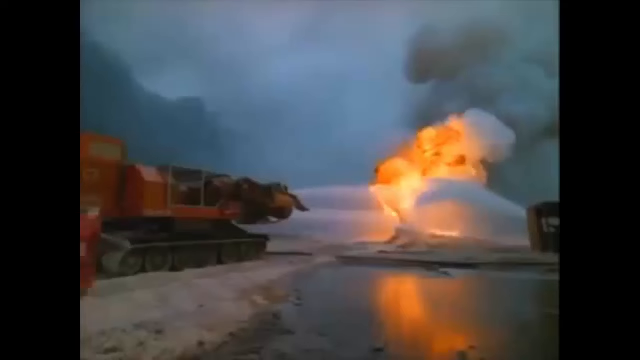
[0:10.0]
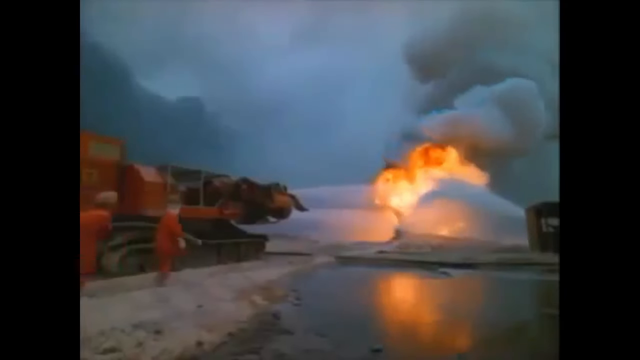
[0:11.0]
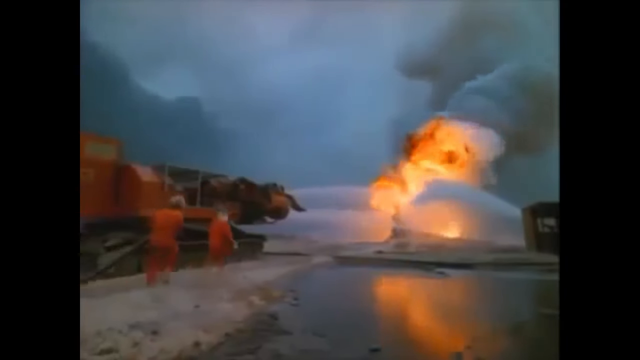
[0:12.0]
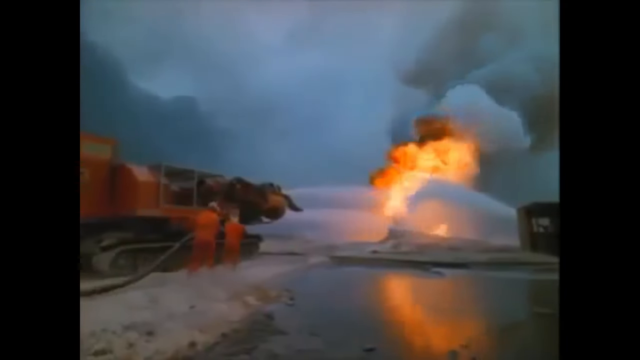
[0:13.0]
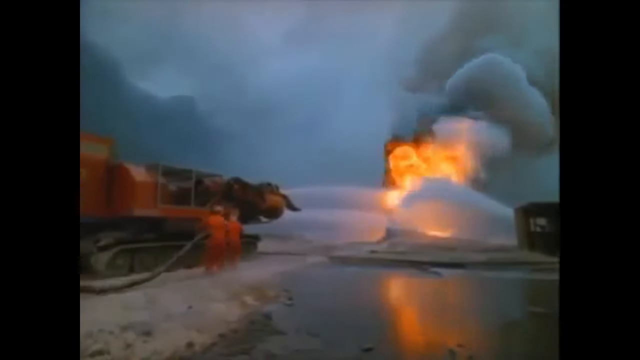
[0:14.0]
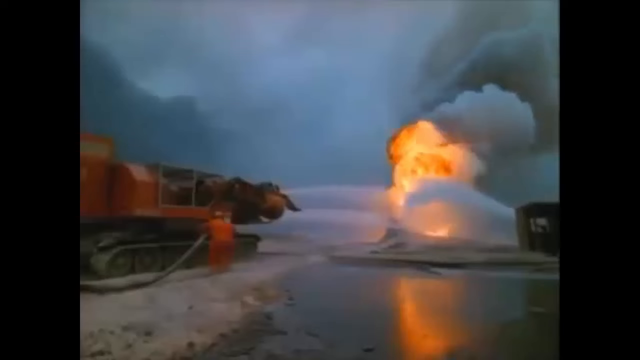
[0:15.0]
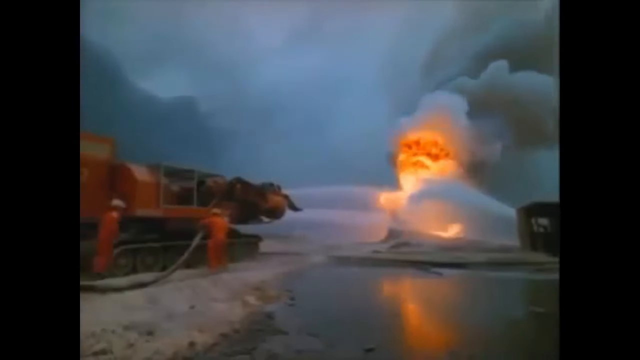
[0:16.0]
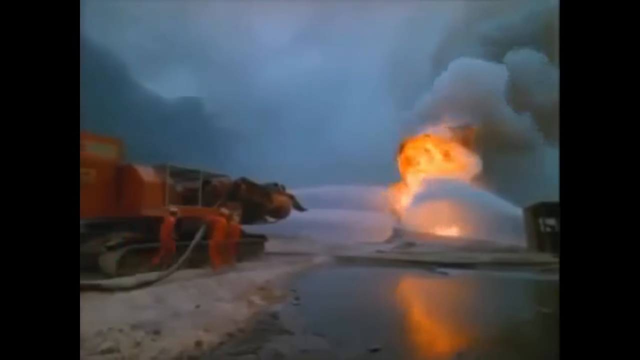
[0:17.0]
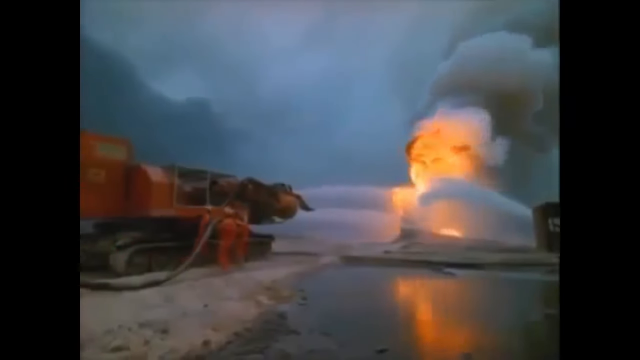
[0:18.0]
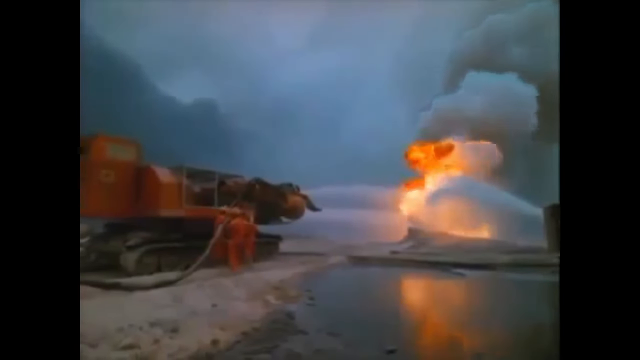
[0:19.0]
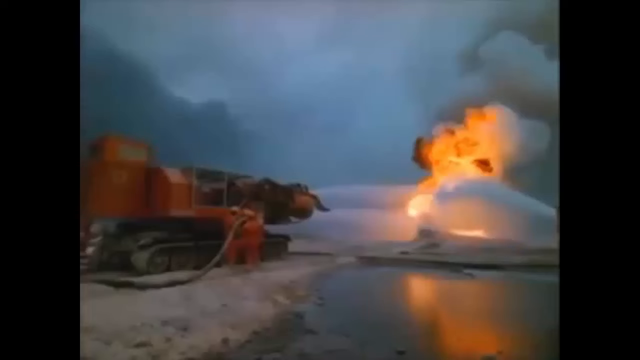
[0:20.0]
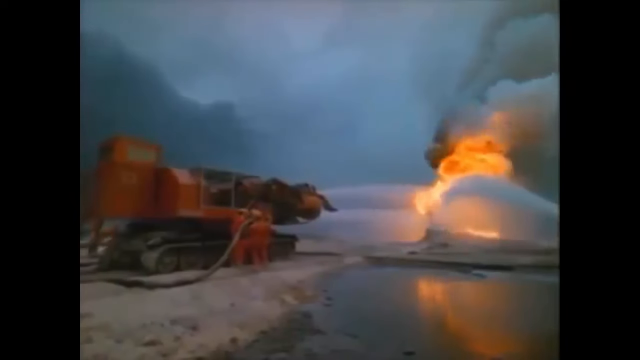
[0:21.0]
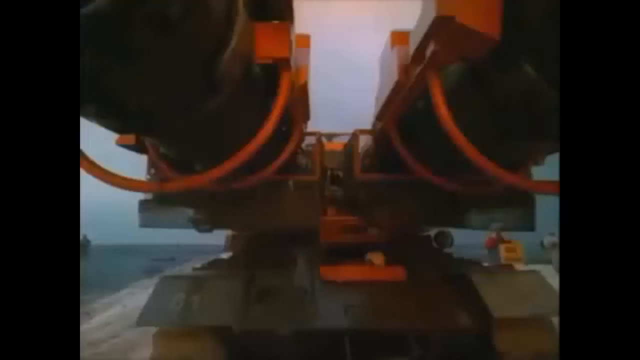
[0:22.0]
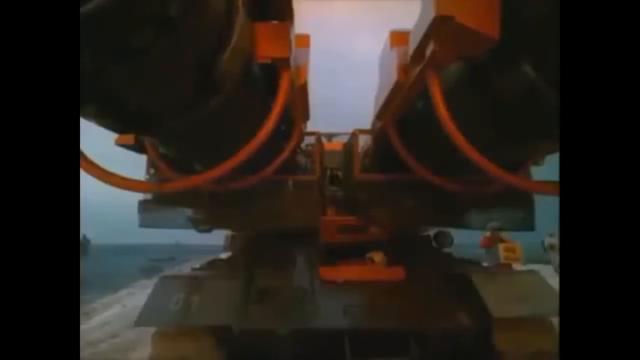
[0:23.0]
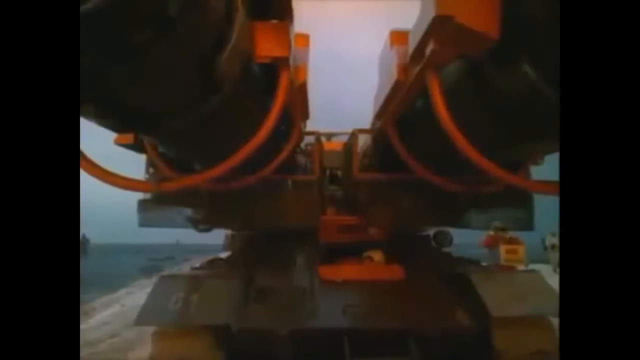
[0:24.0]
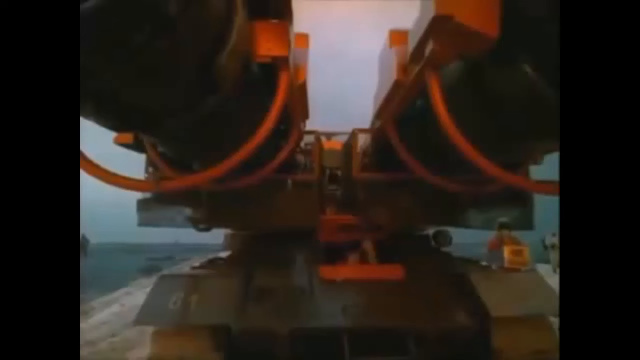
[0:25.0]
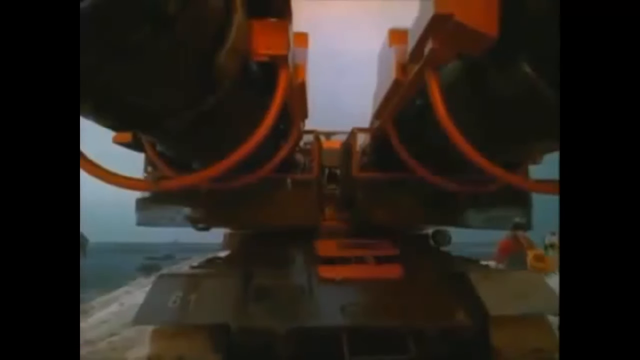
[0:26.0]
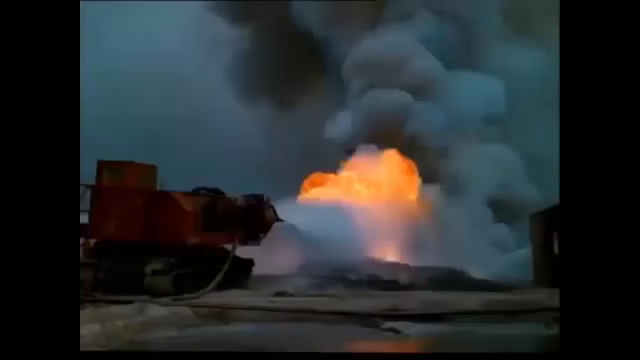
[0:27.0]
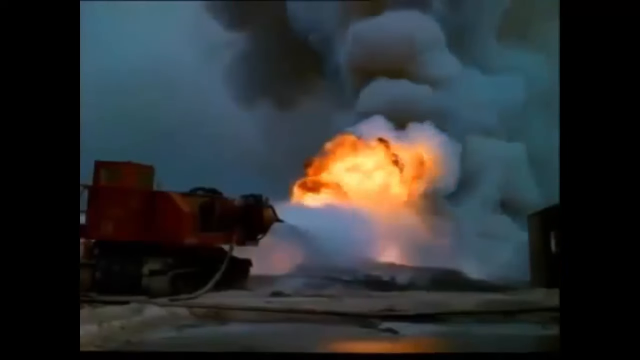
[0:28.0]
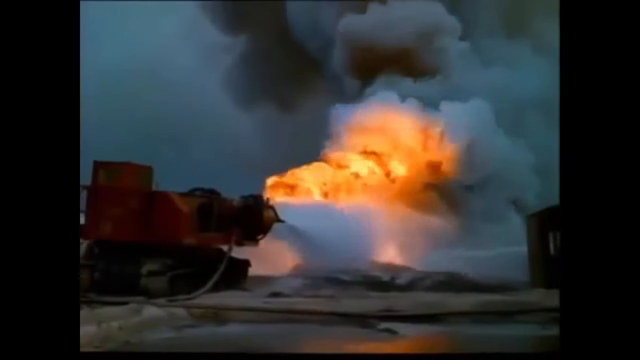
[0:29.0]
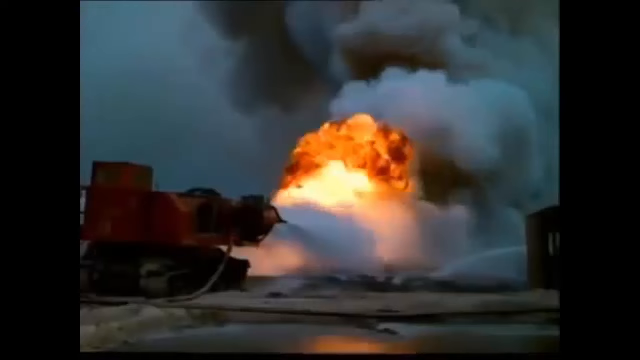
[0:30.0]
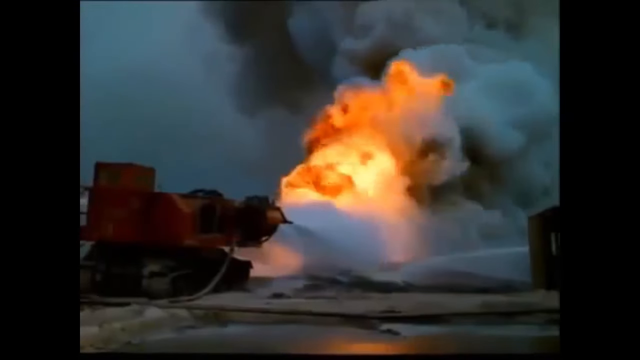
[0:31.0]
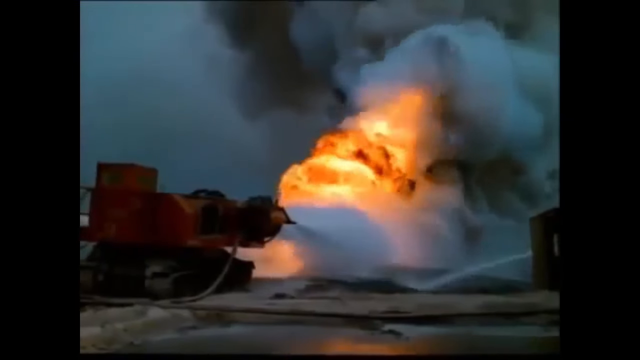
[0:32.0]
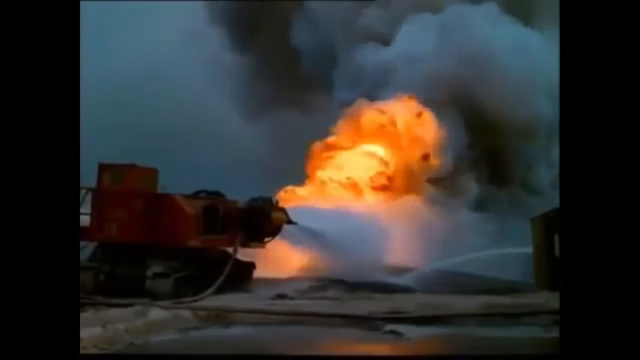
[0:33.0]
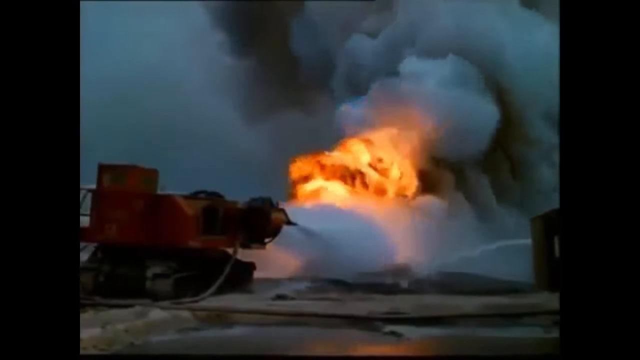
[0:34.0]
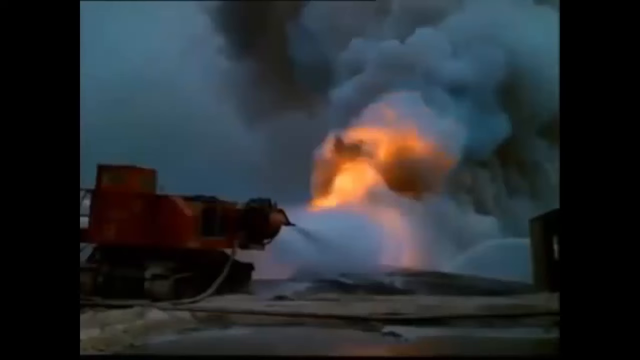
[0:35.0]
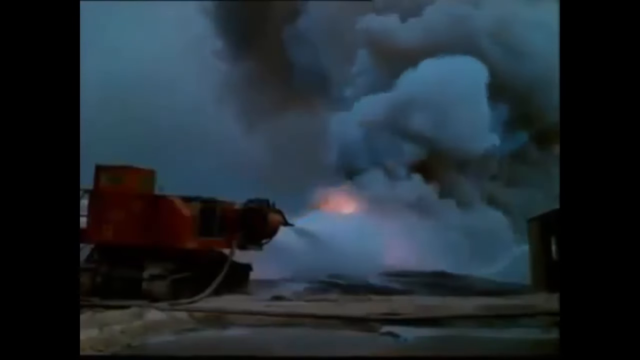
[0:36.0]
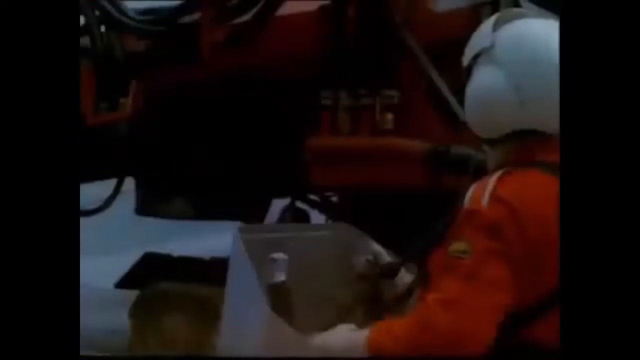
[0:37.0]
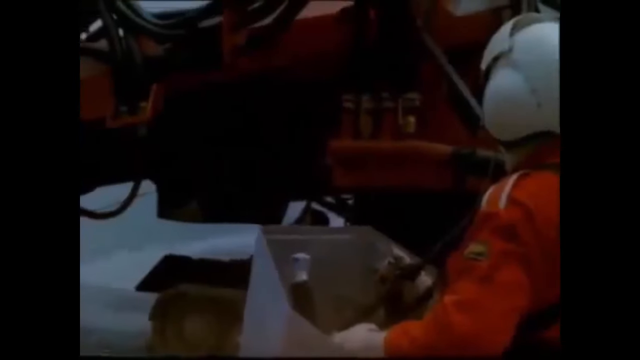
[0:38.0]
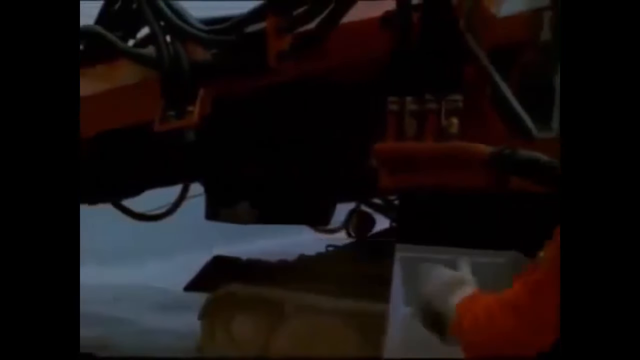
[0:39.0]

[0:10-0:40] A person intentionally makes a fire, and afterward they try to put it out using what seems to be a large water gun. The area seems to be full of ice and very cold. There is a huge fire explosion, and machines throw water very fast so the fire cannot grow larger. Many firefighters are also working hard.